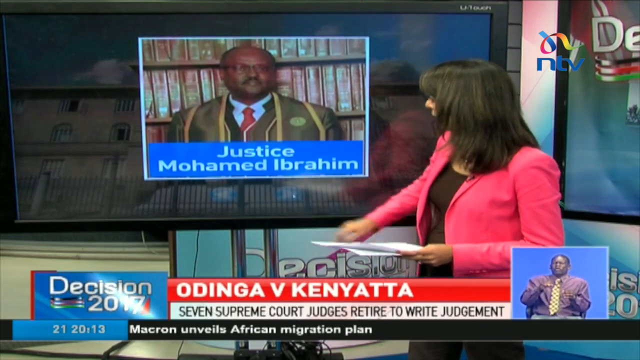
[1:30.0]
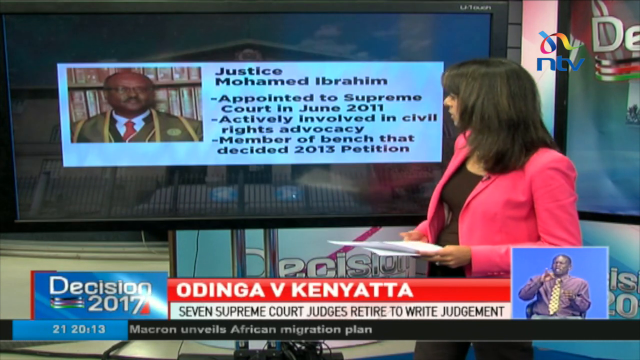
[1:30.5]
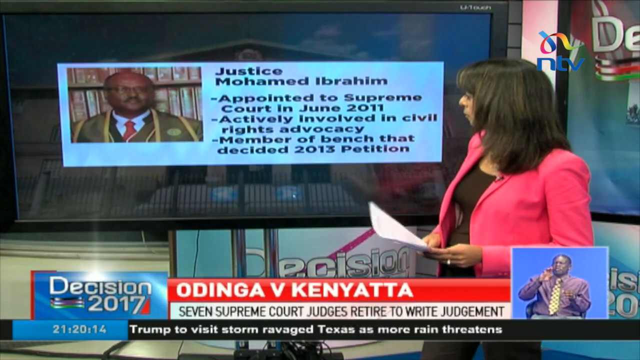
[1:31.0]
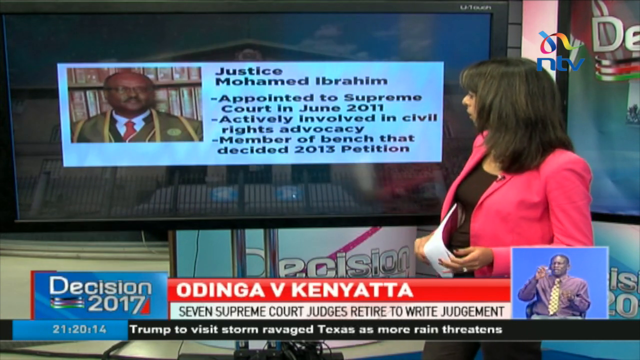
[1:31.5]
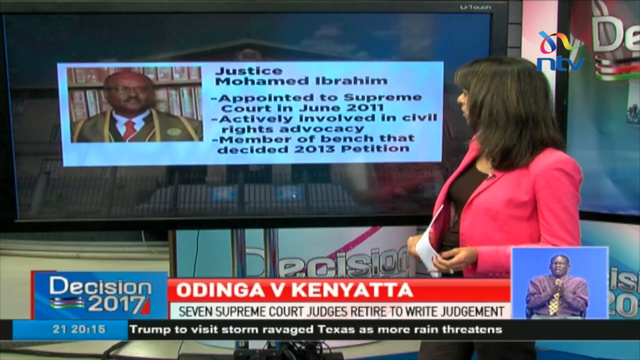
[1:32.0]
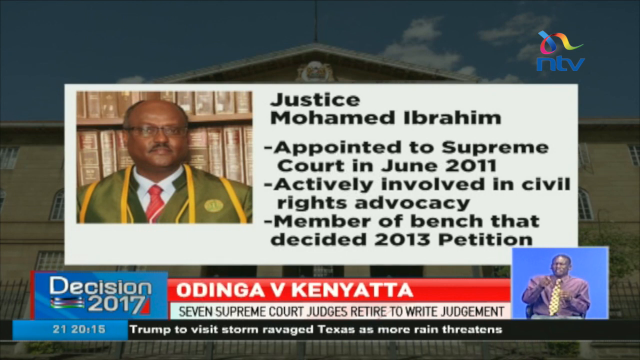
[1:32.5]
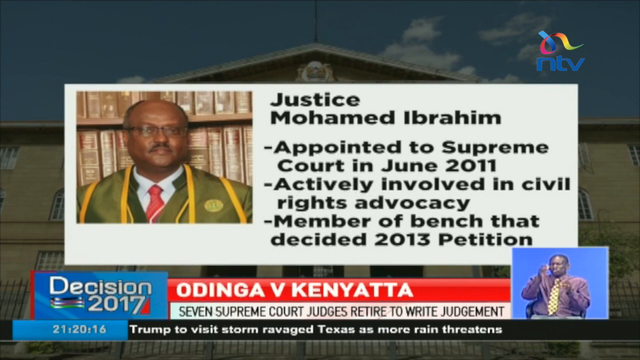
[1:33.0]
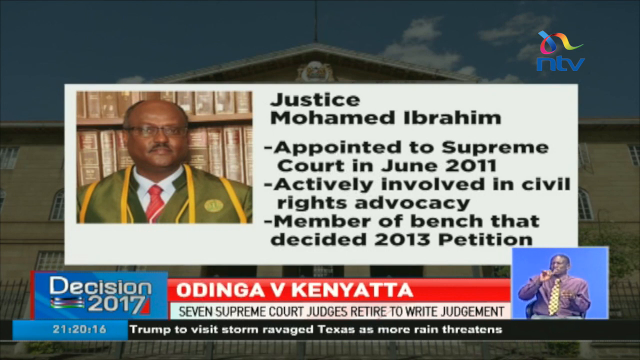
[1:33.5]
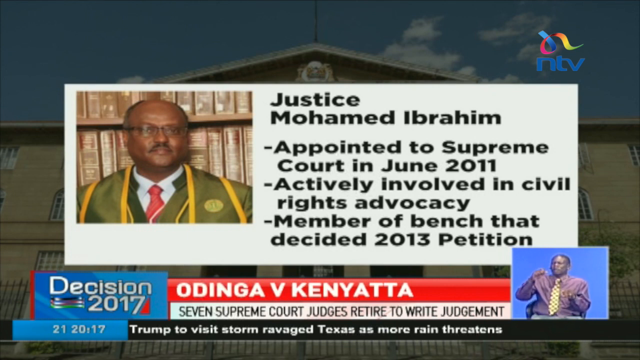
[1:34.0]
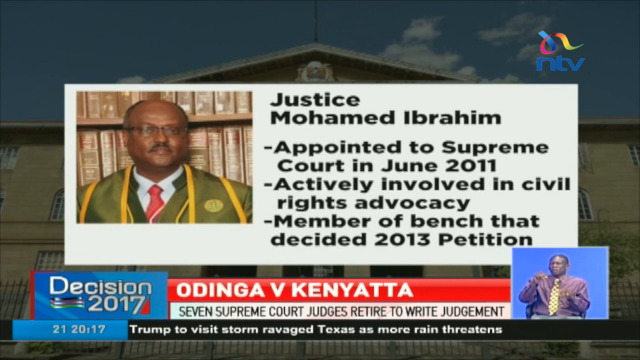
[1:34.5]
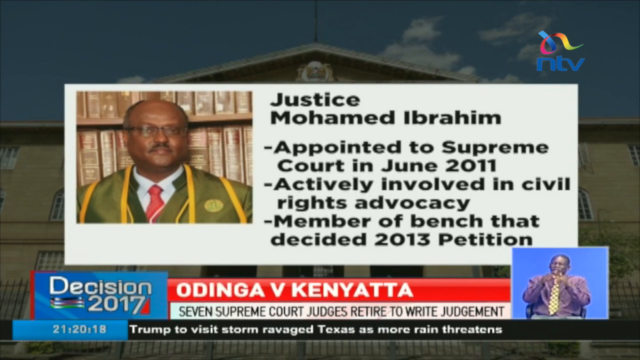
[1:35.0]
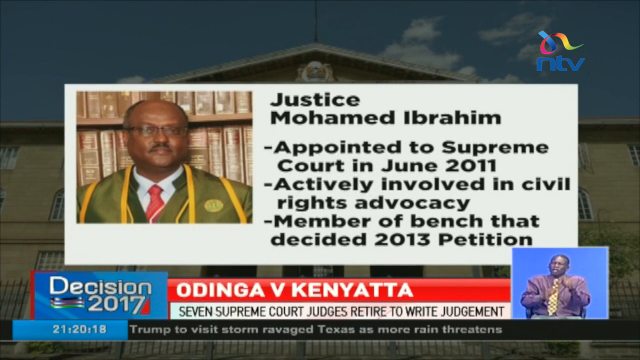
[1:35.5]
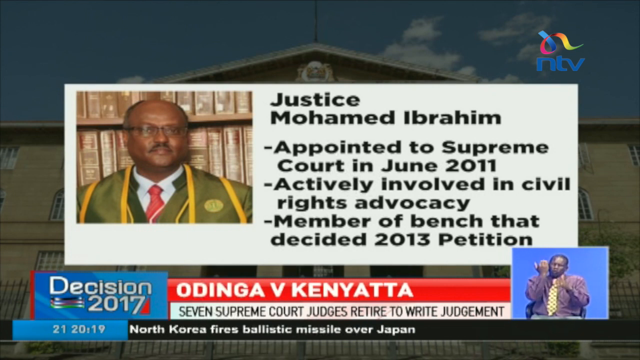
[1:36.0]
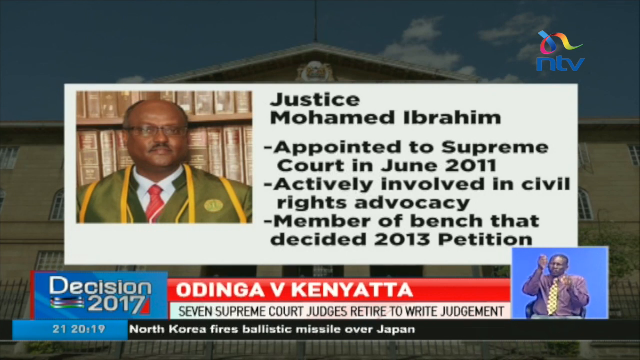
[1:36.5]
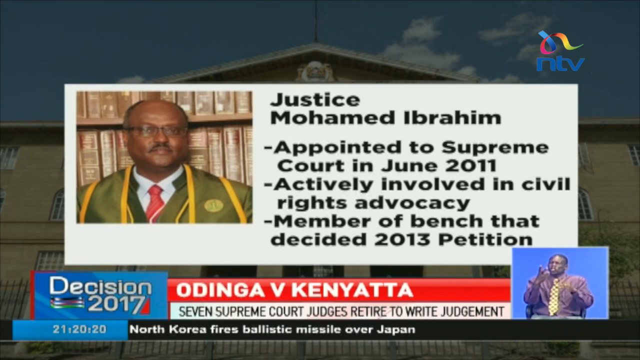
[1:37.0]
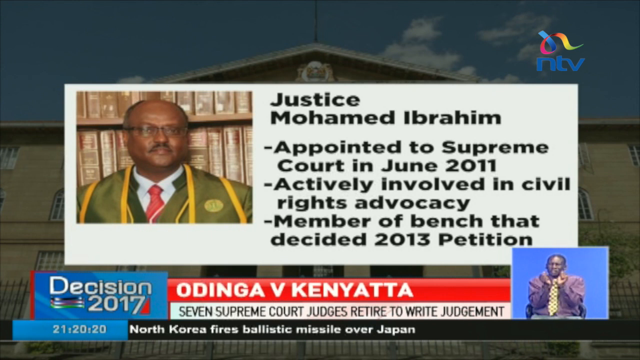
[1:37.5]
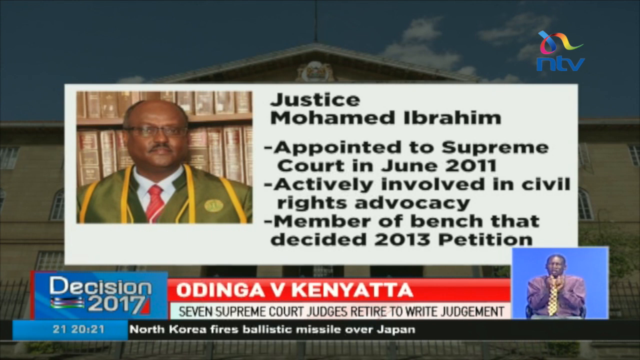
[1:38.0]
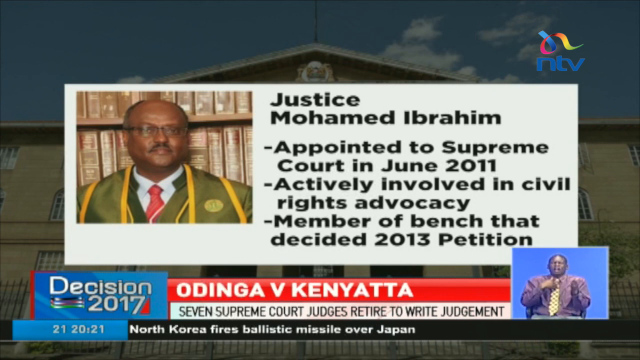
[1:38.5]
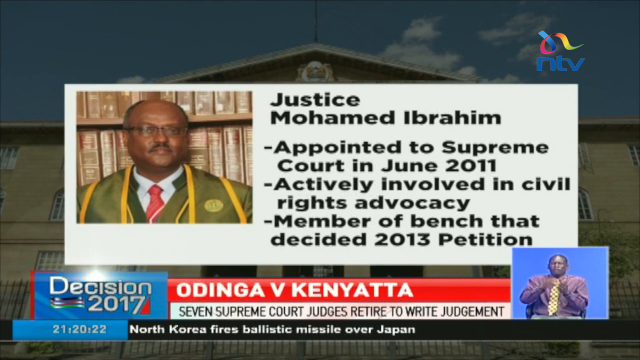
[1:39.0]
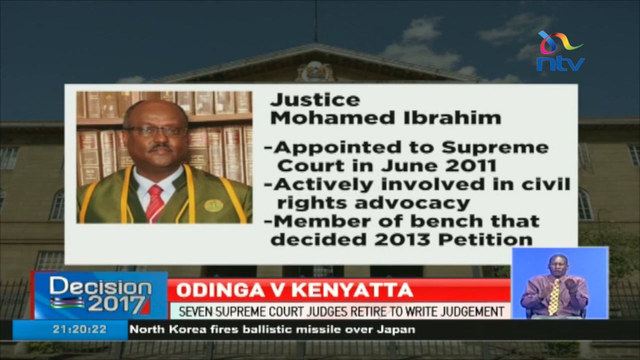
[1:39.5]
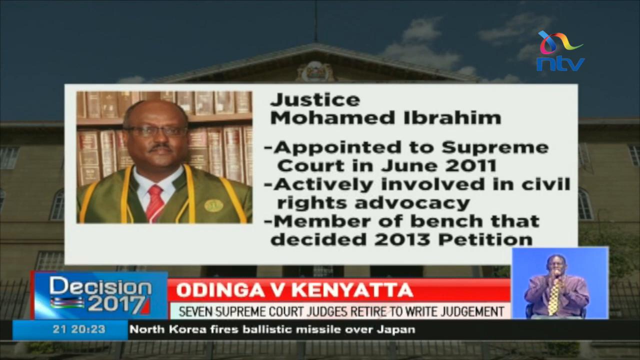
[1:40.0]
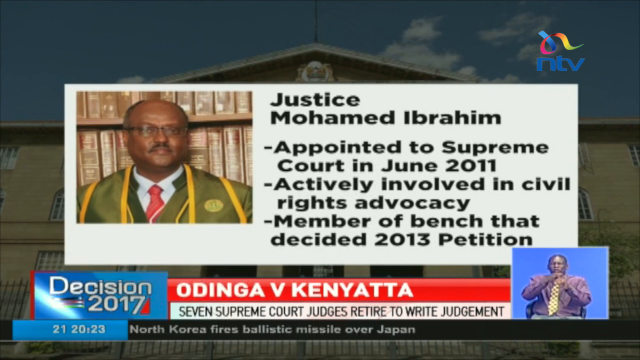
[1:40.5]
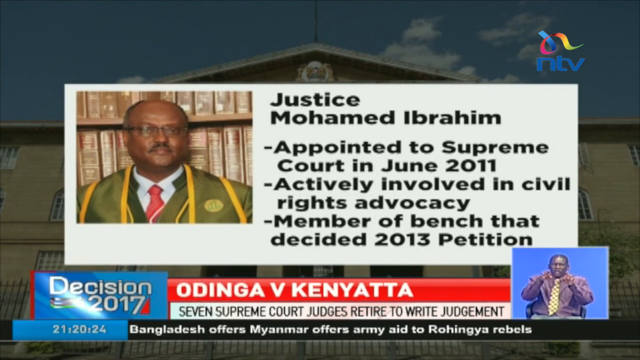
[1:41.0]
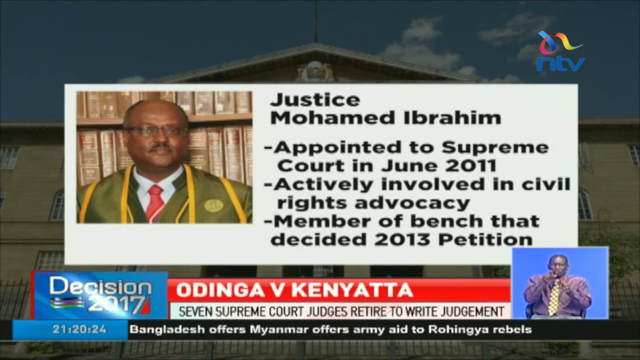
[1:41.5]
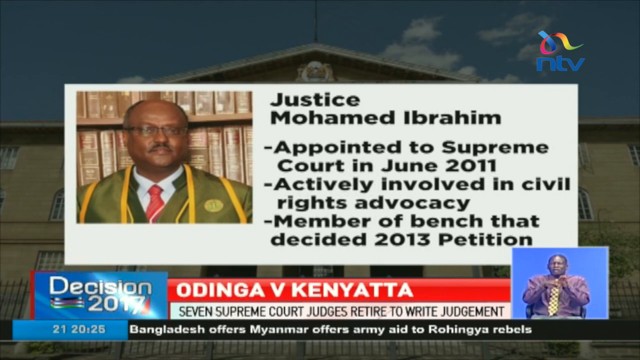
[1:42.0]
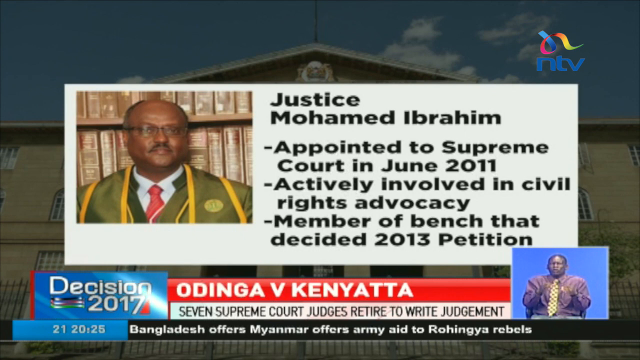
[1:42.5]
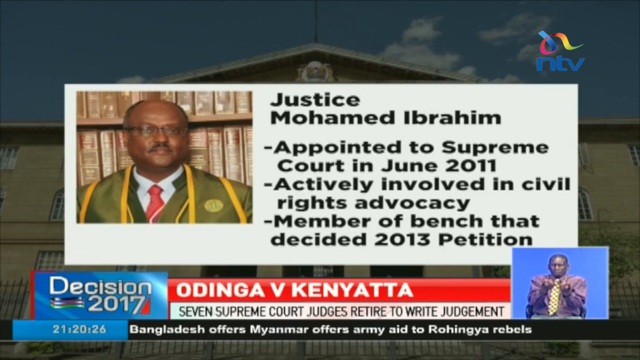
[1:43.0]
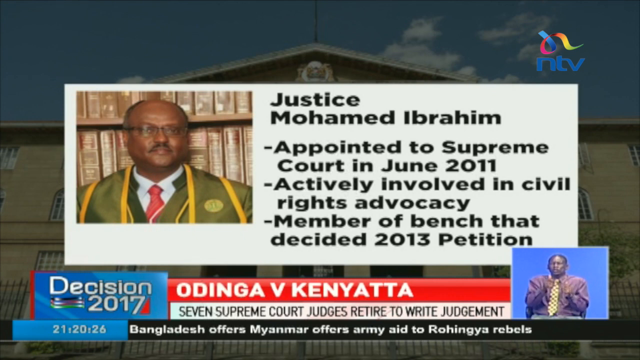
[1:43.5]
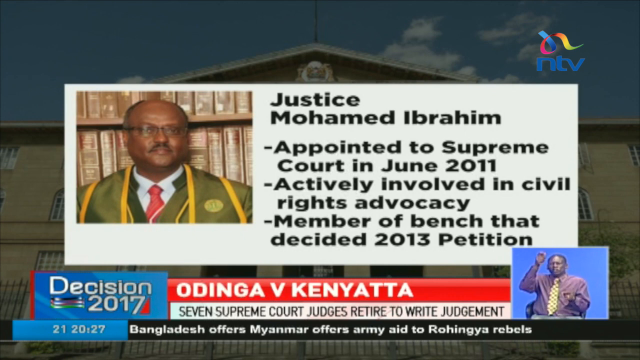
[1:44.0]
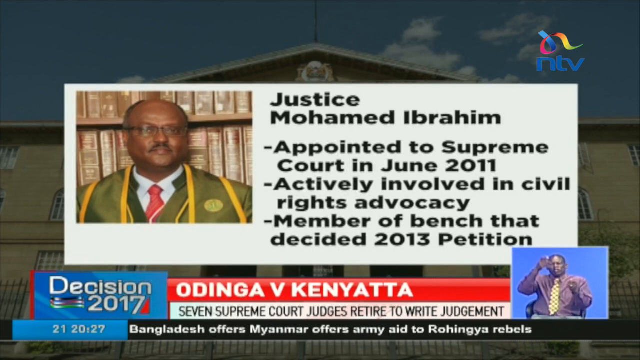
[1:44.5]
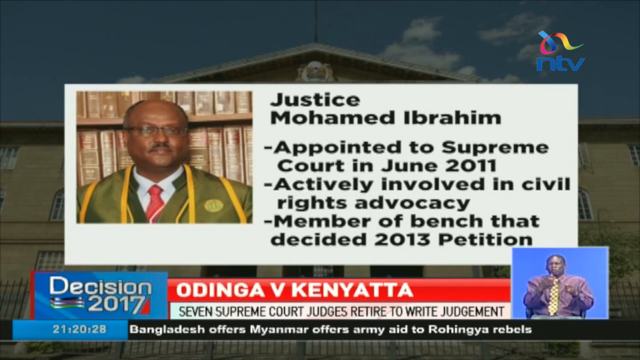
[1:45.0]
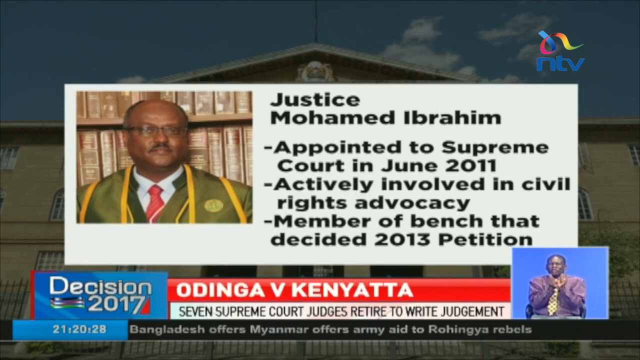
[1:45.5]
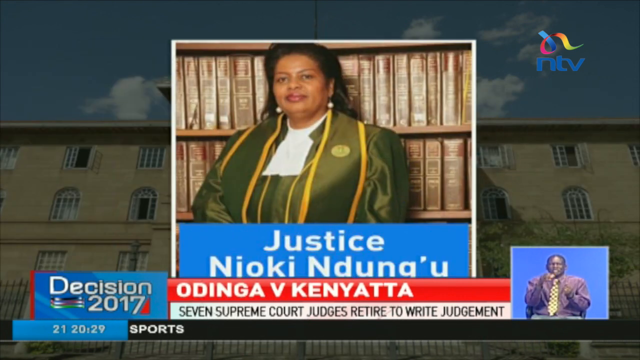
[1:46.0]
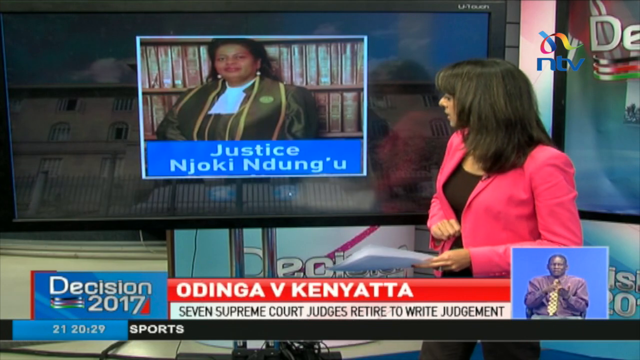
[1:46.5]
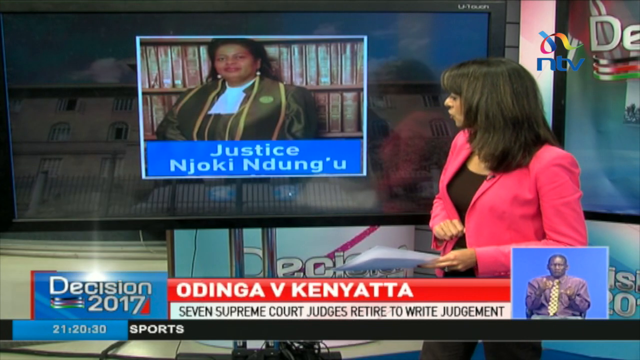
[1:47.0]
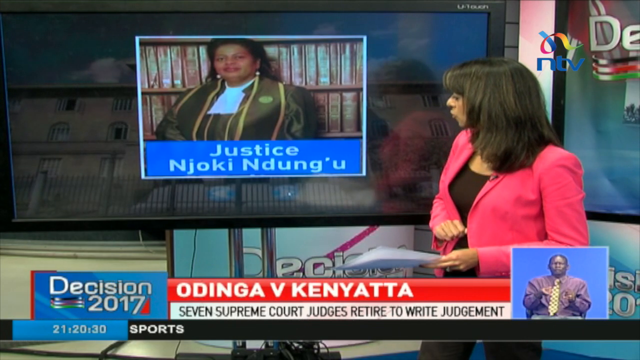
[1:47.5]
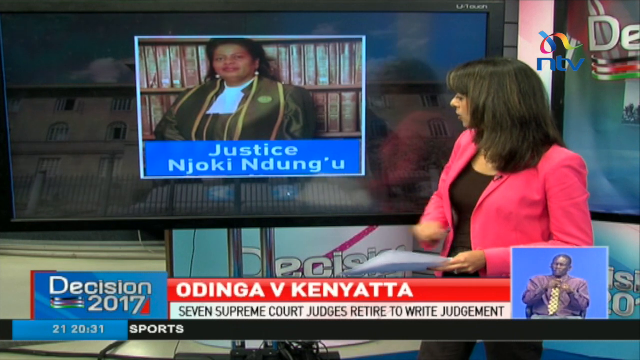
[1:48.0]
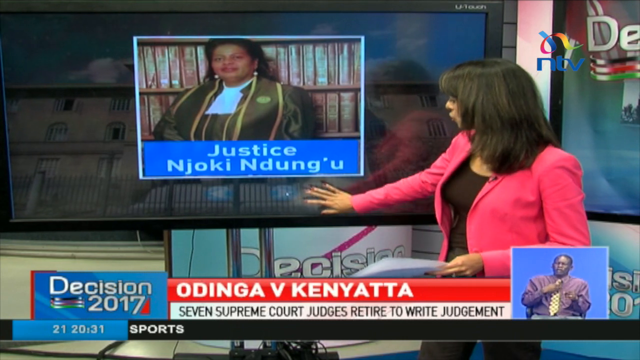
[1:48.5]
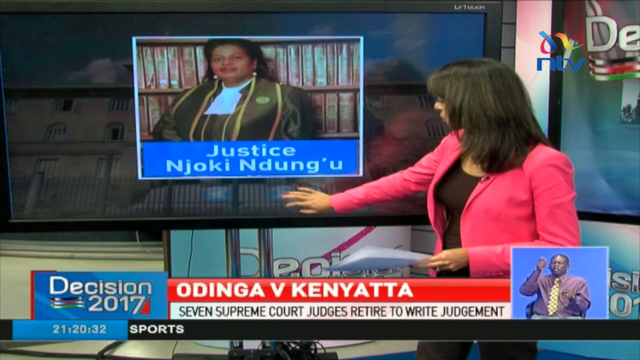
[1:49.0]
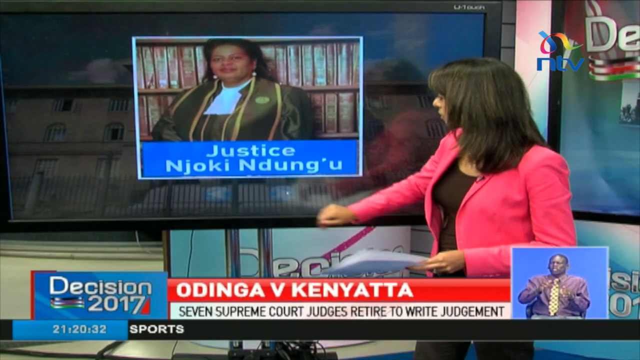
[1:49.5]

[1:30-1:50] A female news reporter stands in front of a large TV screen. The image changes to a large white rectangular box; on the left is a picture of an African man with a bald head, glasses, and a short mustache, wearing a dark green suit with yellow trim and something like a sash around his neck. To the right the text says "Justice Mohamed Ibrahim," with three bullet points: "Appointed to Supreme Court in June 2011," "Actively involved in civil rights advocacy," and "Member of bench that decided 2013 petition." The image then goes full screen in close-up, overlaying a background that looks like a large white courthouse-like building. In the bottom right-hand corner, a small square frame shows an African man in a light purple shirt and yellow tie sitting in front of a blue background doing sign language. The scene changes back to the reporter in front of the large screen, which shows a picture of an African woman with black hair wearing something like a black jacket and a black sash around her neck with yellow trim on both sides. Underneath the picture it says "Justice Njoki Ndung'u." The reporter presses the play or forward button, and the image changes to the white rectangular box with the picture of Justice Njoki Ndung'u on the left and three bullet points of facts about her.